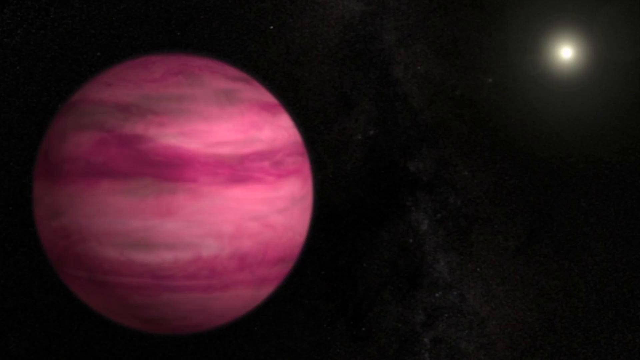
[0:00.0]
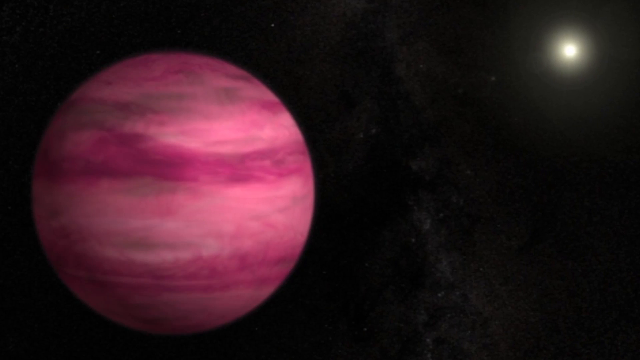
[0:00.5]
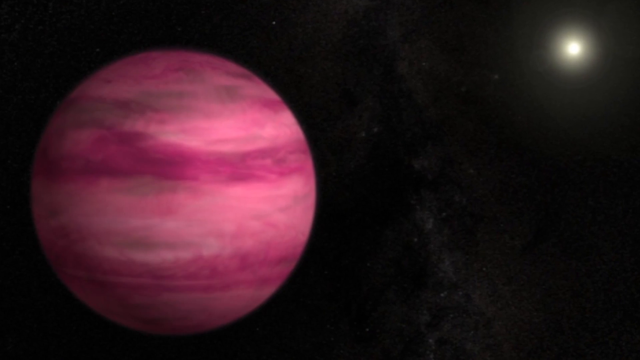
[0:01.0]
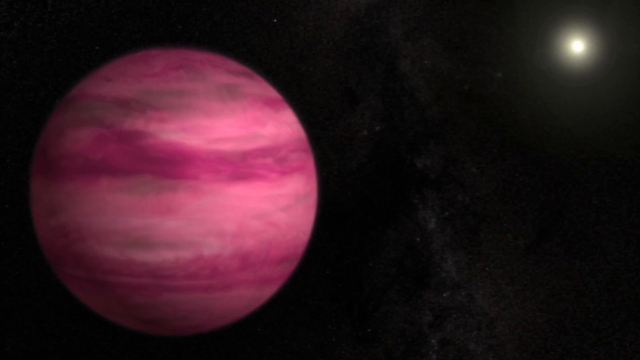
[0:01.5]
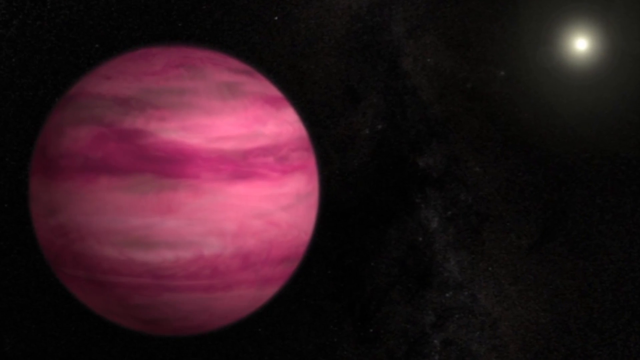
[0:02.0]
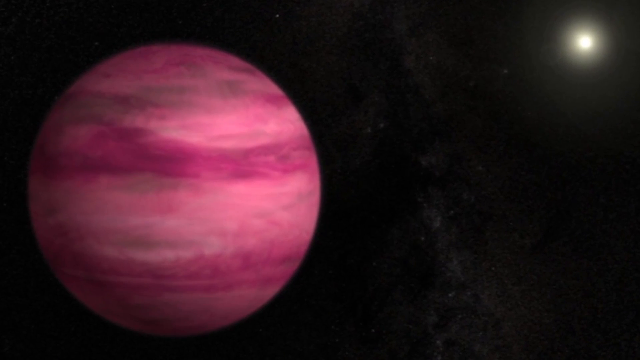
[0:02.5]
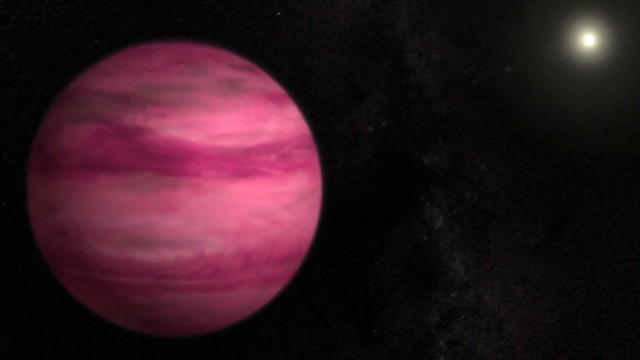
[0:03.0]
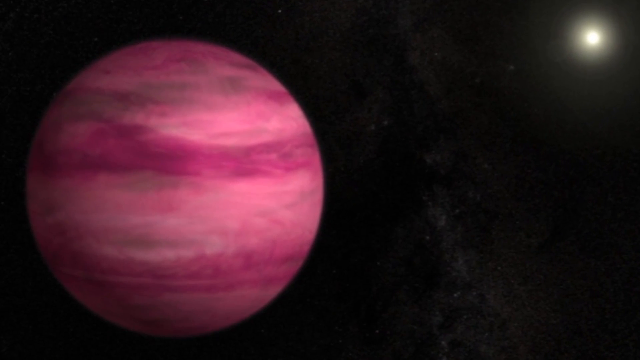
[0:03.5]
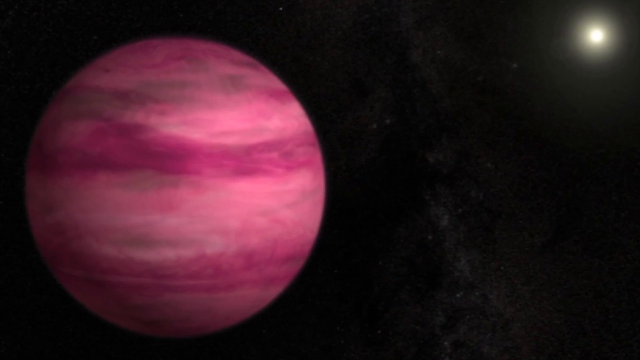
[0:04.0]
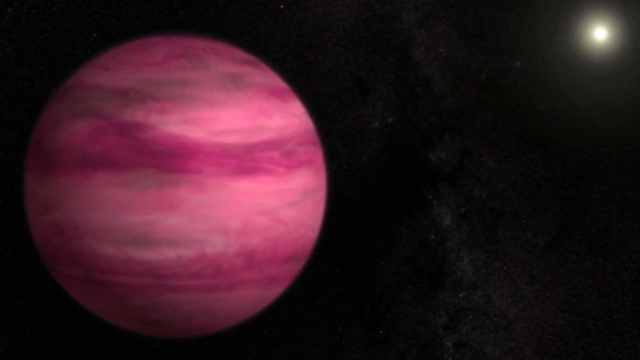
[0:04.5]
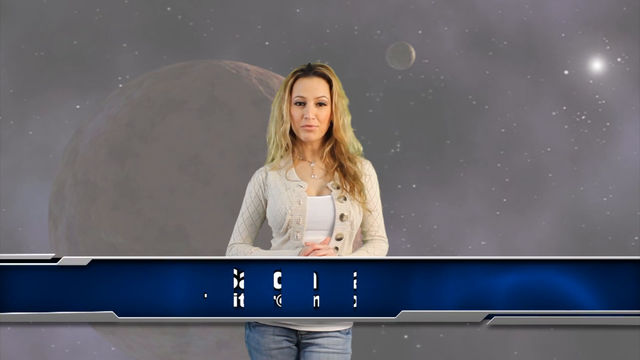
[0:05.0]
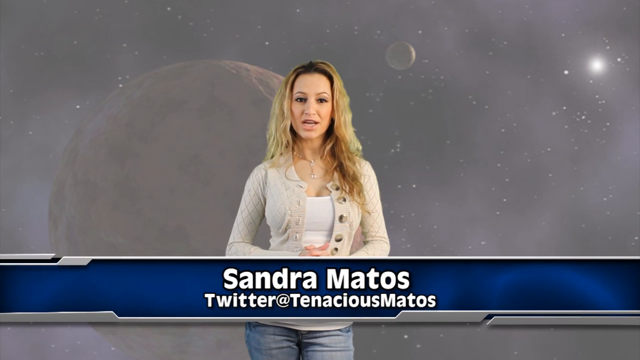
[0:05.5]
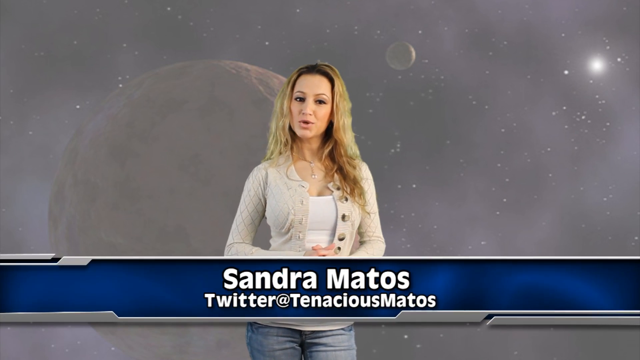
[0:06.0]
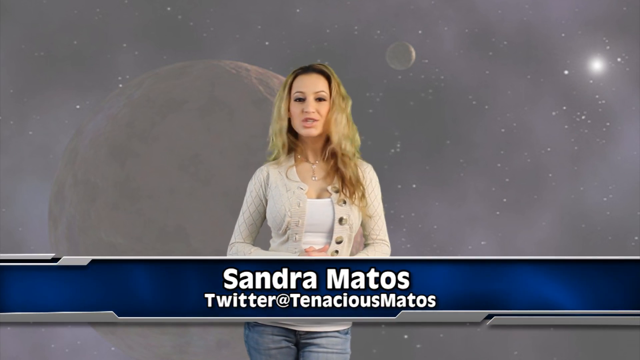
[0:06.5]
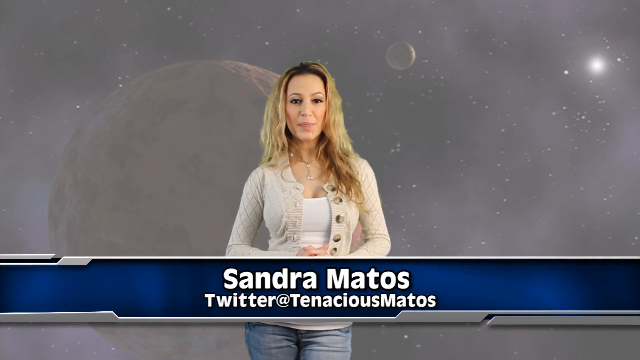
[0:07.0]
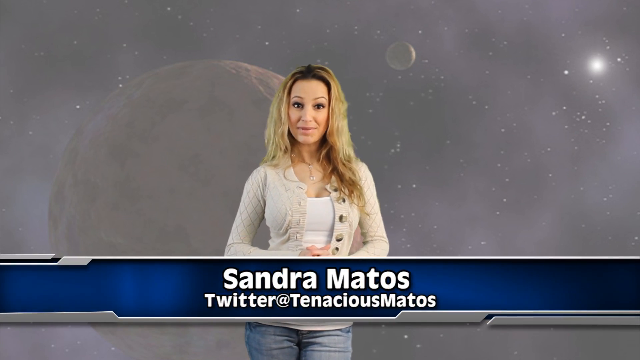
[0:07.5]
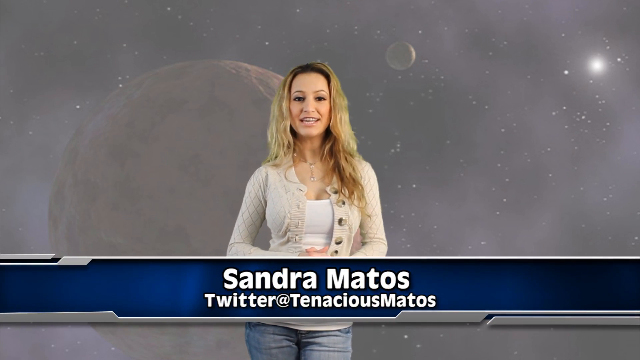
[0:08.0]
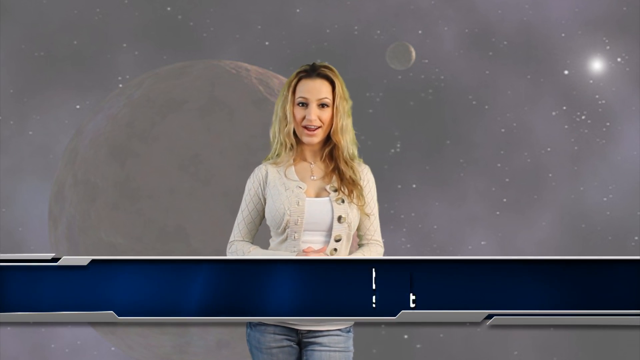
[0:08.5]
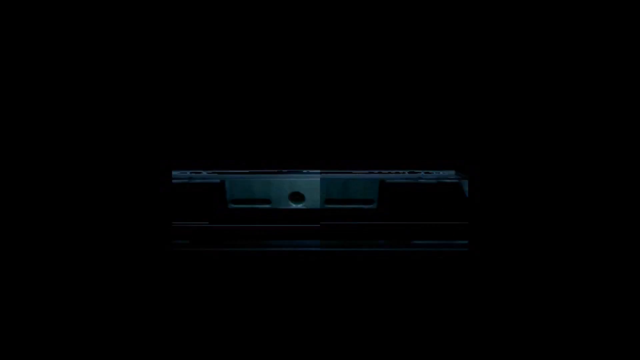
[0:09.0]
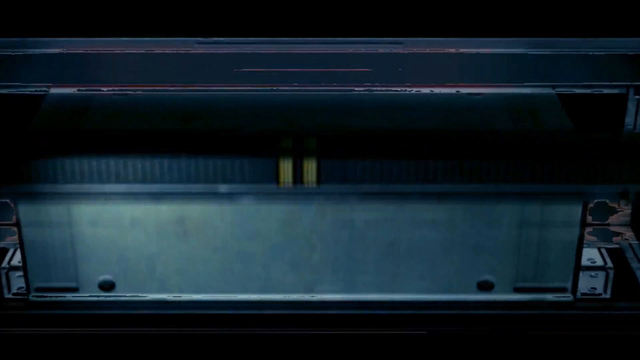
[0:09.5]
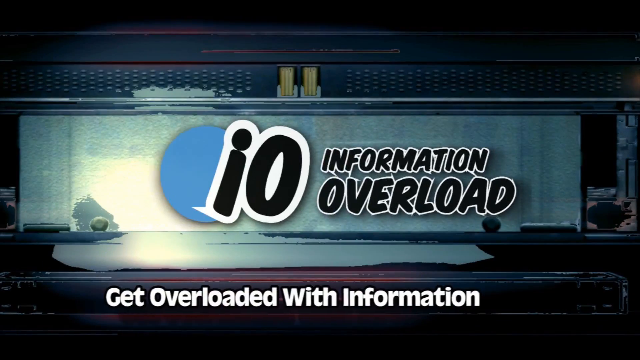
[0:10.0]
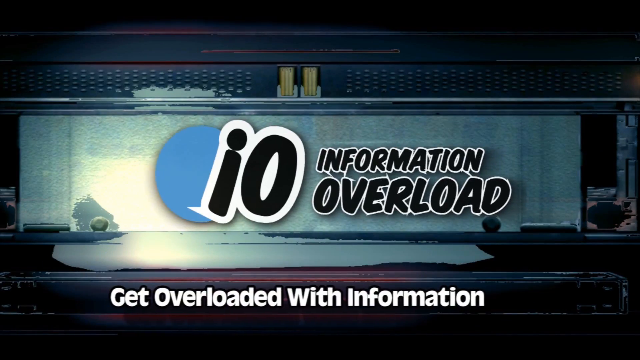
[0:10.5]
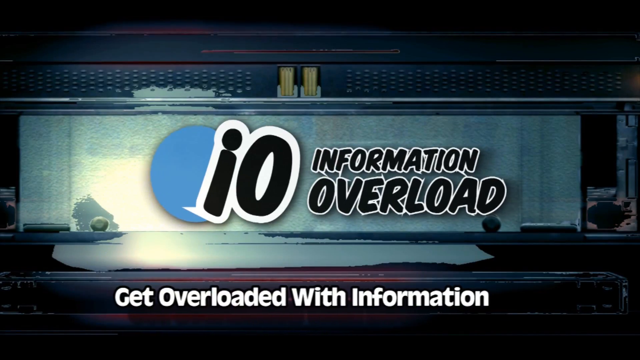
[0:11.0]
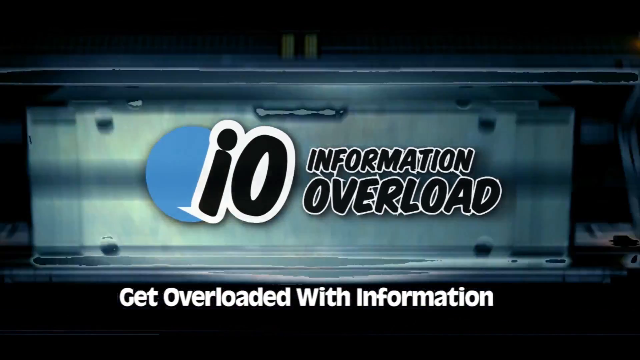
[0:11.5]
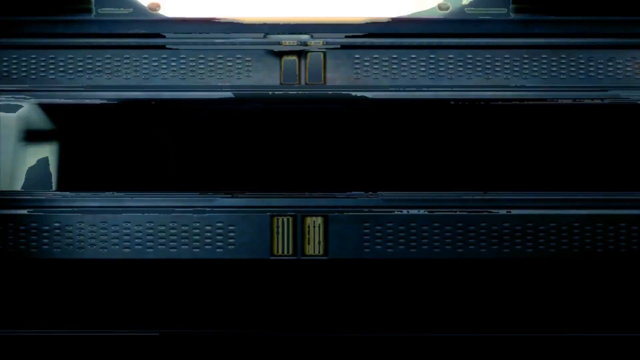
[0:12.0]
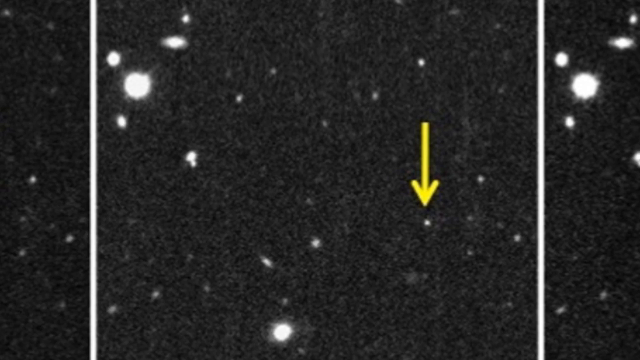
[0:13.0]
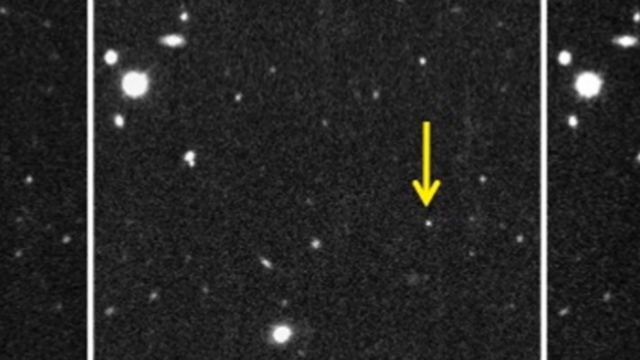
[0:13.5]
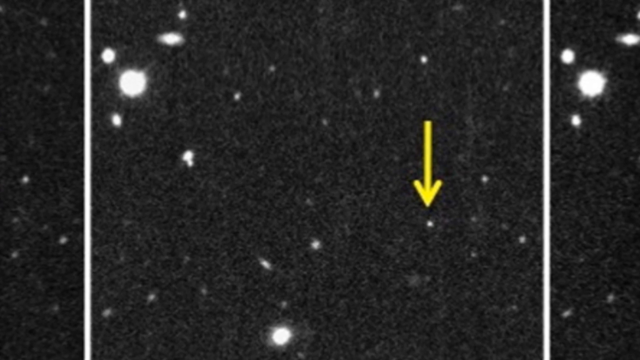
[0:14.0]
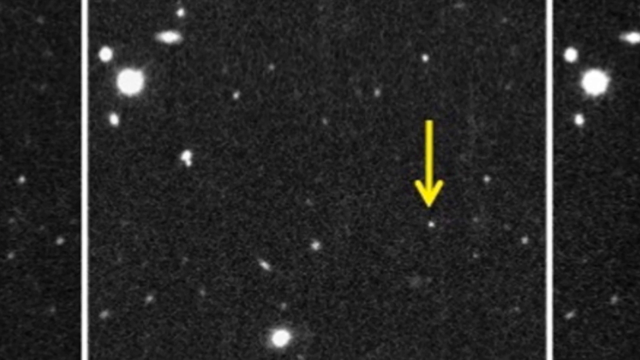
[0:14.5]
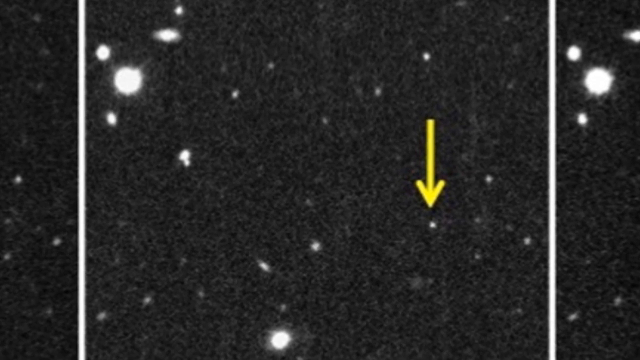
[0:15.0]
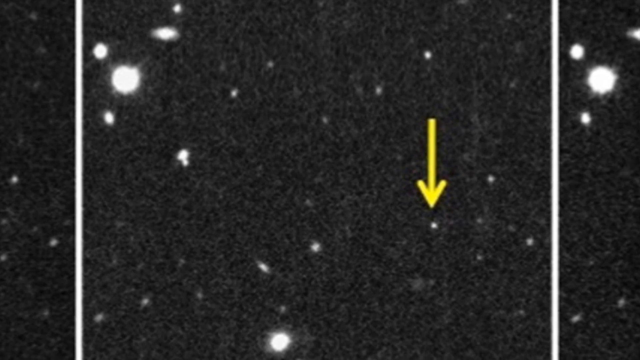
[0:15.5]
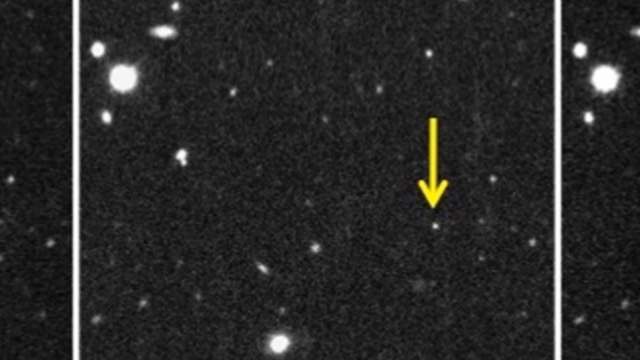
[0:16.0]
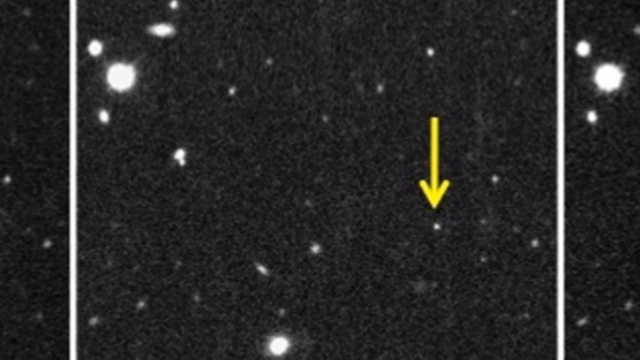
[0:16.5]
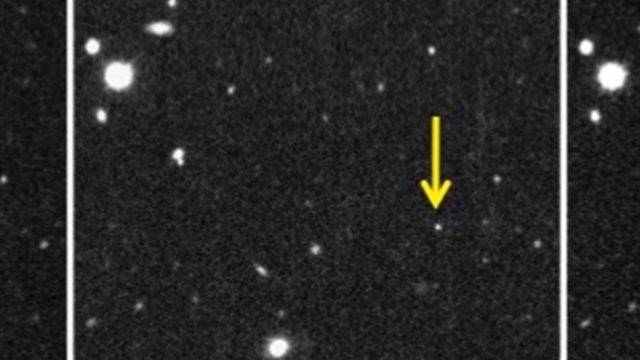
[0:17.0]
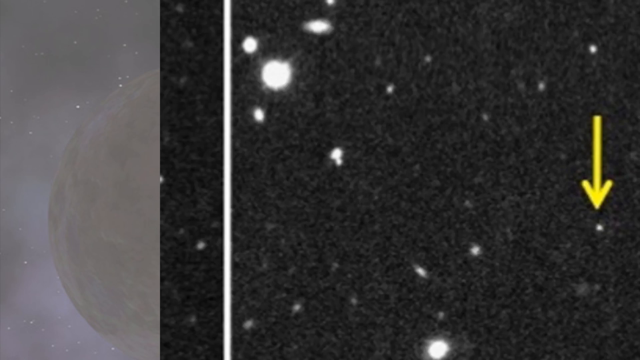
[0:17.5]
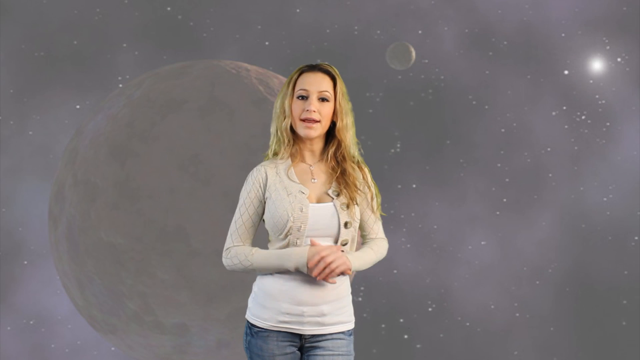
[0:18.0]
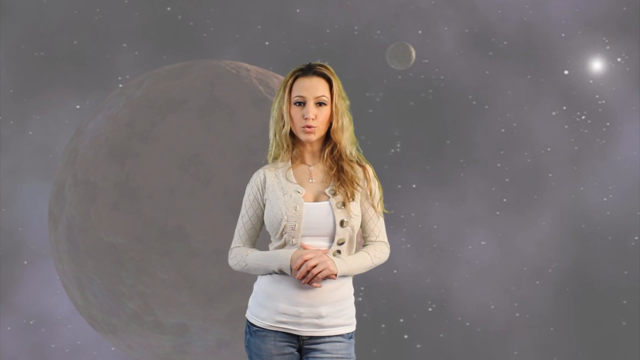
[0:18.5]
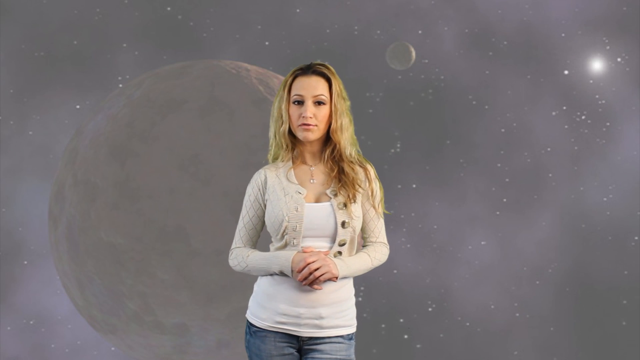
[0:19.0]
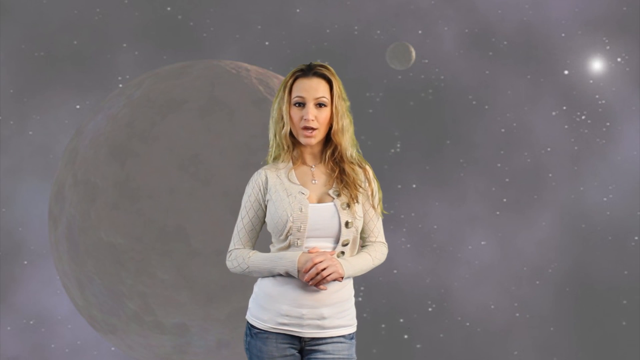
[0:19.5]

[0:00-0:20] The video opens on a large planetary body in deep pink on the left side of the screen, with a small shiny ball to the upper right, both set against a very dark background. The two planetary bodies remain in view, and then the screen transitions to a woman with long, wavy blonde hair in a cream sweater and inner blouse, standing against a gray background. As she begins to speak, her name, "Sandra Matos," is written across the bottom of the screen, along with her Twitter handle, "Twitter at Tenacious Middles." She flicks her hair and looks quite animated as she talks. Next comes a screen with the words "I.O. Information Overload," and below it, "Get overloaded with information." The screen then transitions to a dark image covered in white dots, spots and blotches, with a yellow arrow pointing downward to one of the white spots; it looks like something shot in space. The segment ends with the woman in the cream-colored sweater speaking again.